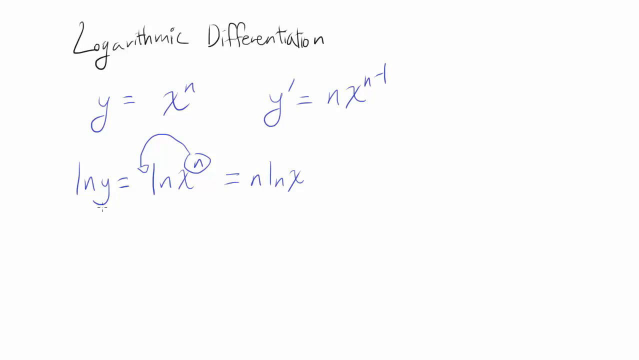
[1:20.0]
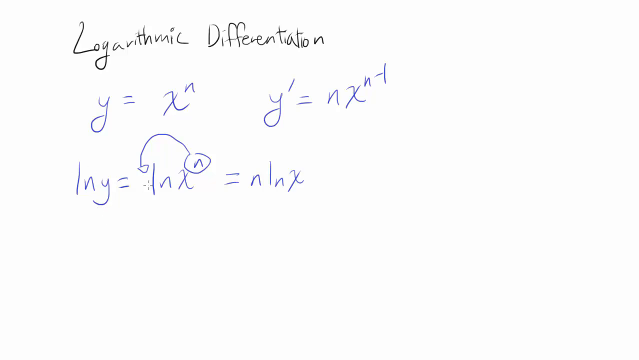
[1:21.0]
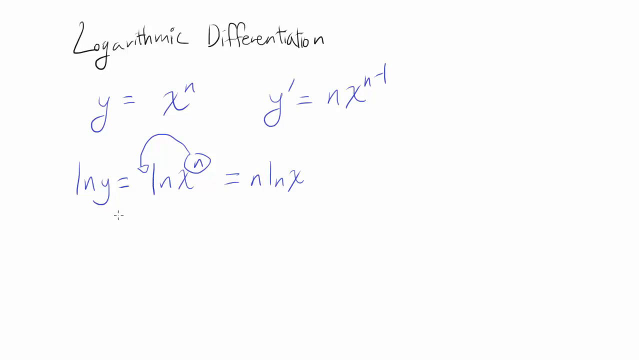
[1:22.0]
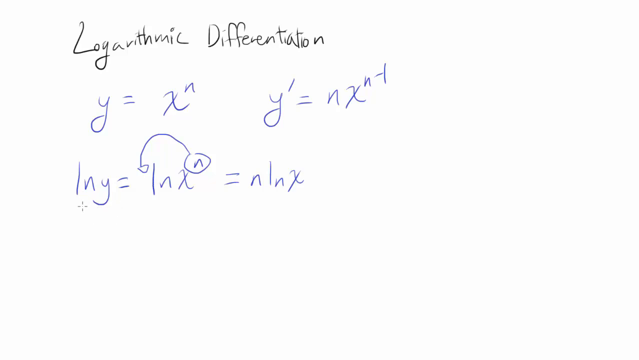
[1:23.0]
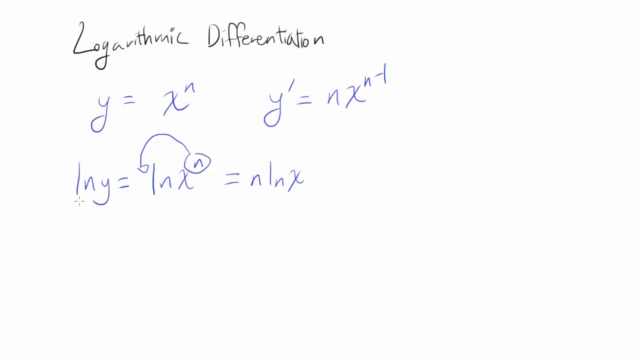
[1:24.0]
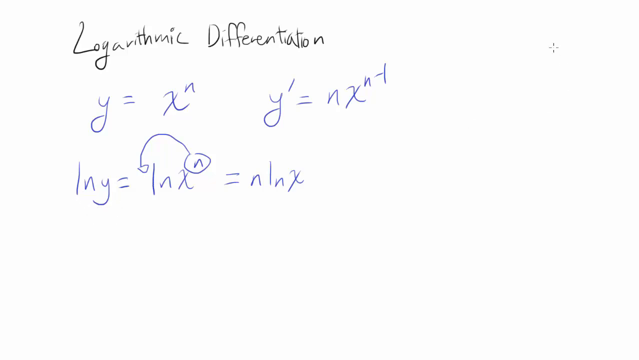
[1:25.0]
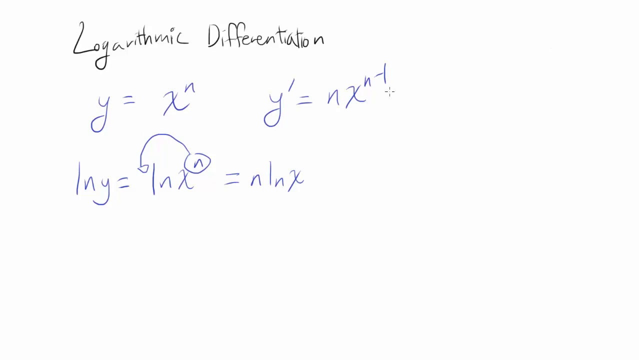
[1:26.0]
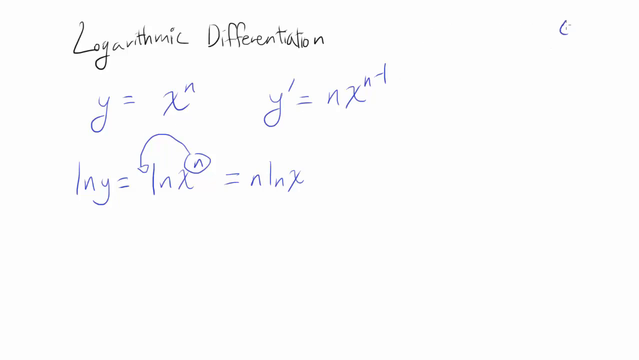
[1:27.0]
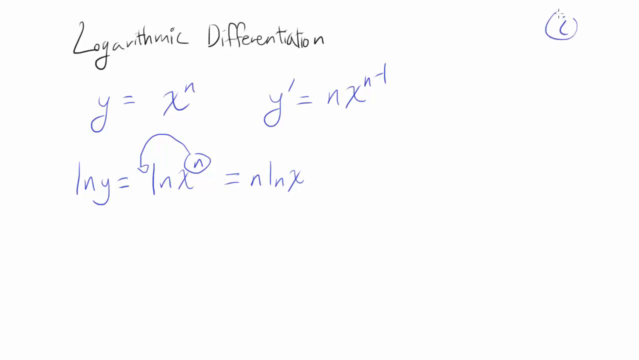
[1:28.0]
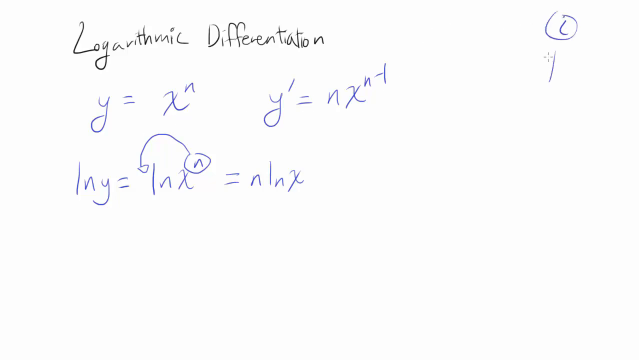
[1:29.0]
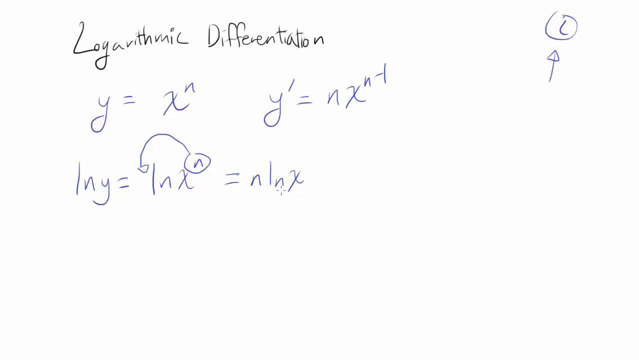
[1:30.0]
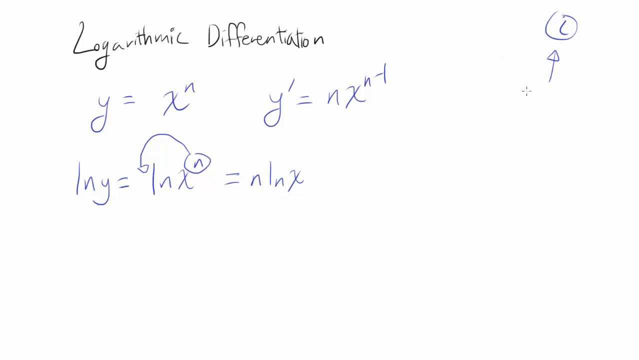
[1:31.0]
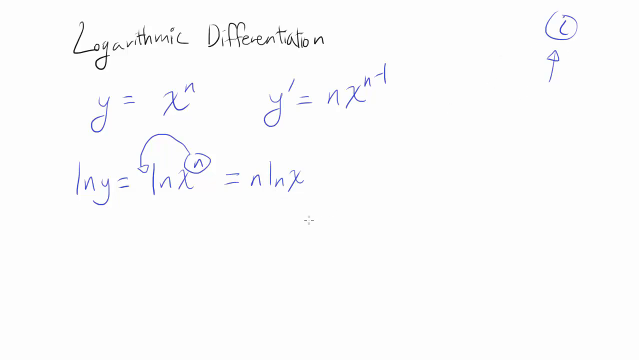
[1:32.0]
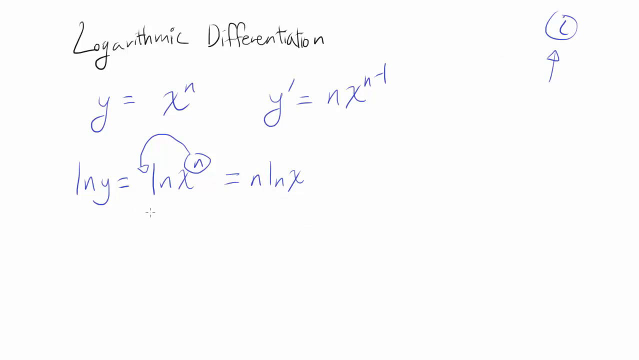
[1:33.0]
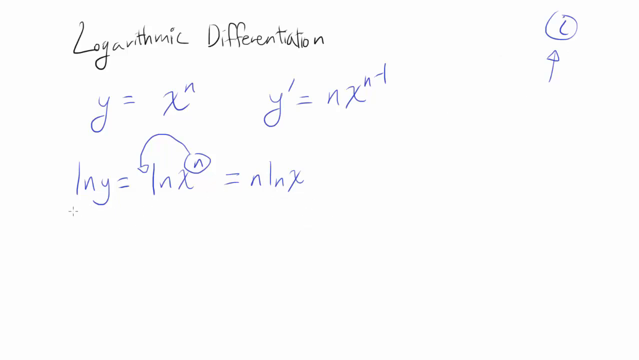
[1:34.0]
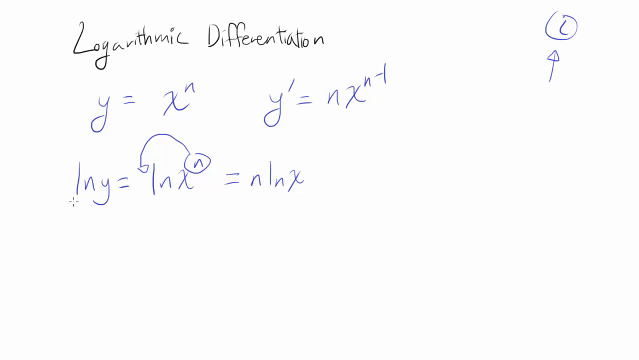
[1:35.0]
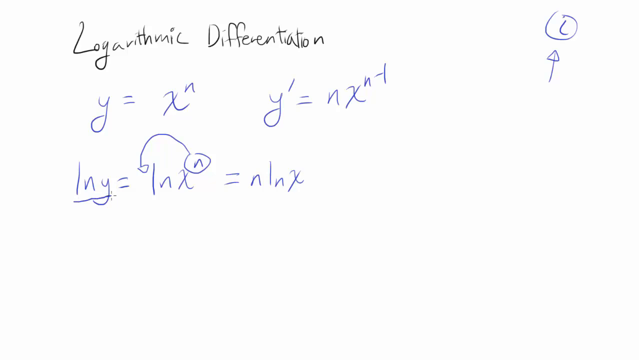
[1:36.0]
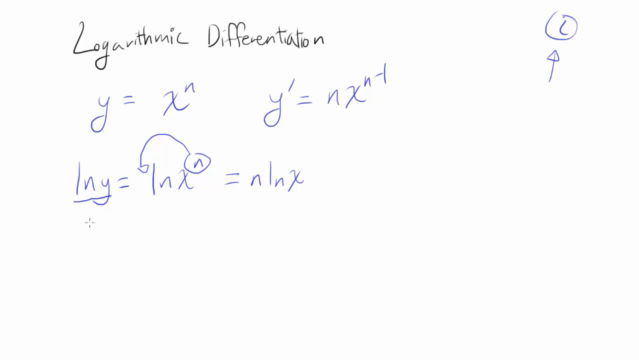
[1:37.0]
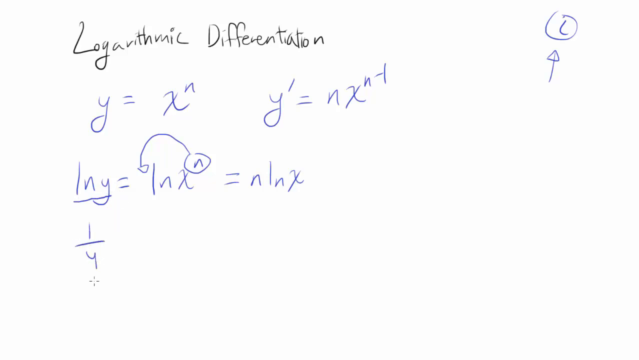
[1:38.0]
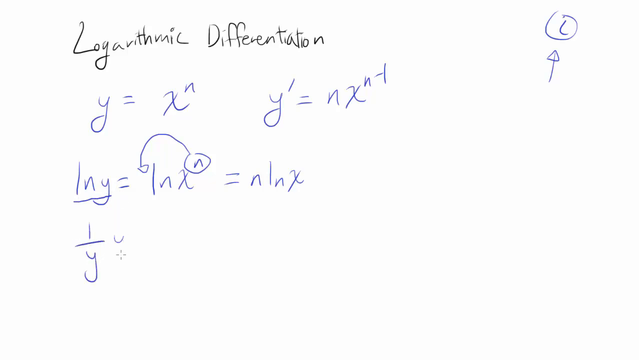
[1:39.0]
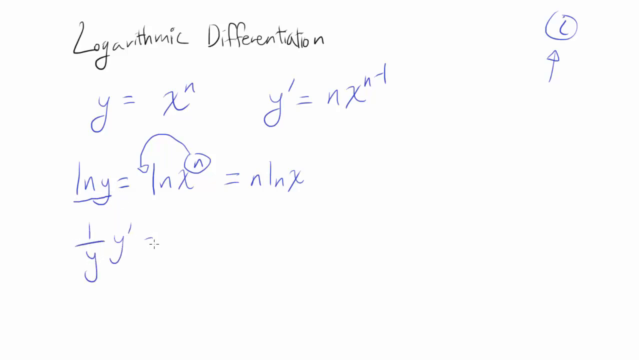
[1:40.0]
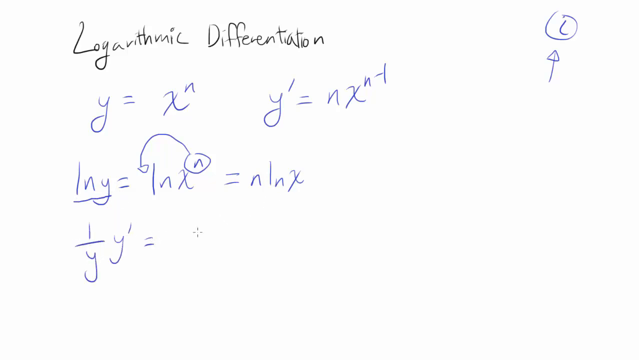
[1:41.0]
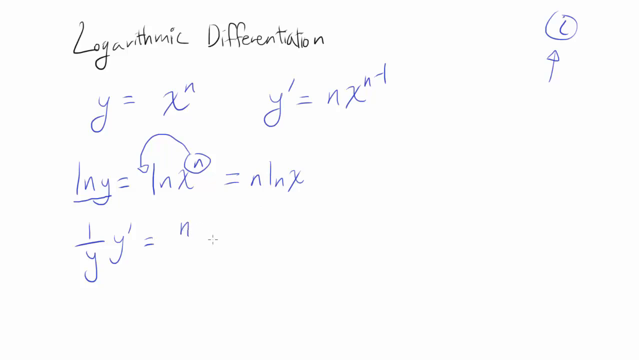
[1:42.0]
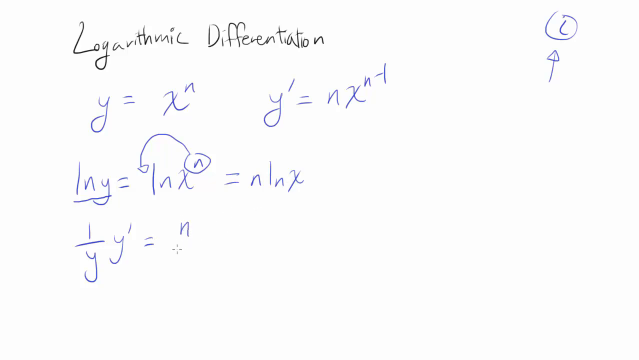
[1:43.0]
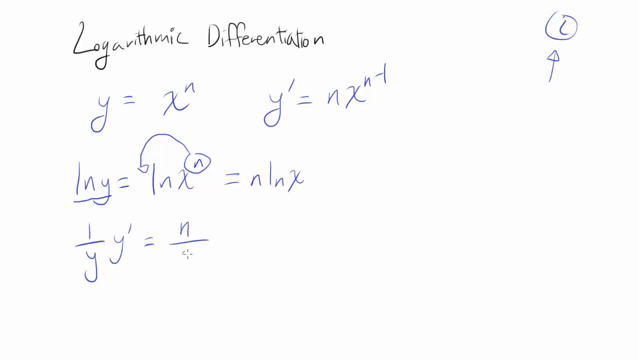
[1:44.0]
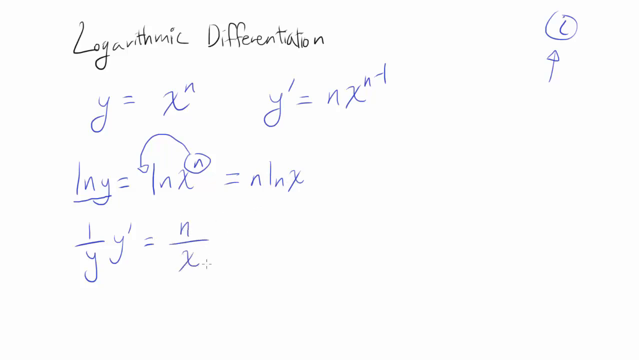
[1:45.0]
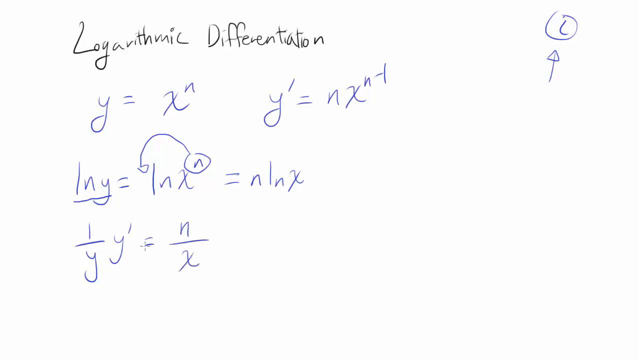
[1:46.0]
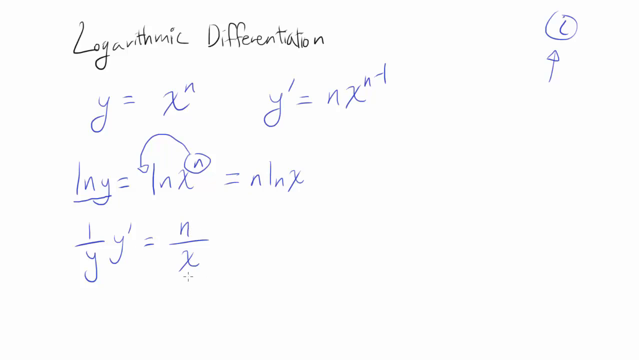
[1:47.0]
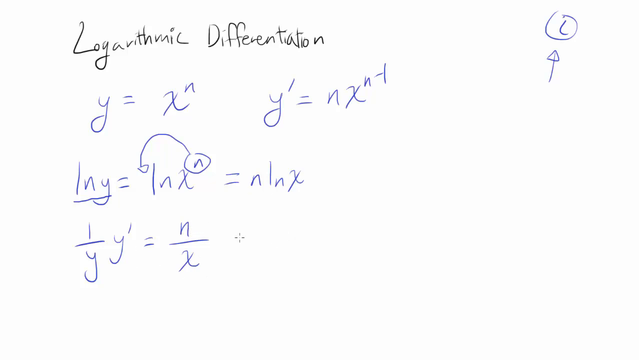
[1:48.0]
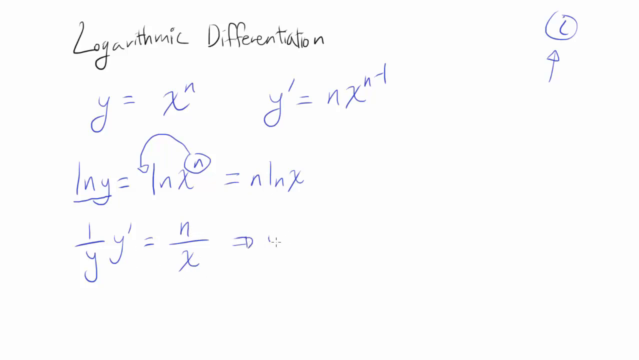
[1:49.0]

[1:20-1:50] Mathematical equations are on a whiteboard. "Logarithmic differentiation" is in black, and y equals x with a small n at the upper right is in blue. The next equation is a y with a 1 at its top corner, equals, n x with a t at the top right. At the far right, about one inch from the right side of the screen, is a line with a triangle at the top, and an l with a circle around it, the circle open at the top. The view stays still so the writing can be read. Toward the bottom the small cursor writes 1 over y, then a y with a 1 at the top right, an equals sign, and n over x.